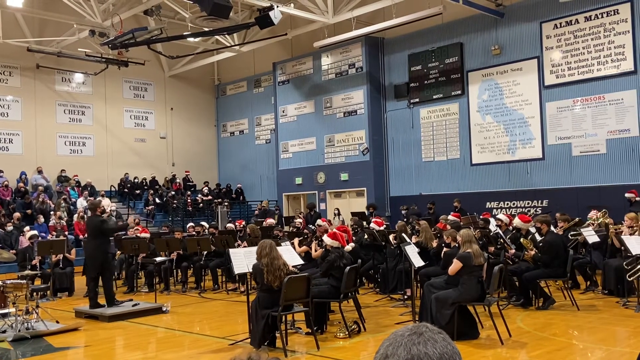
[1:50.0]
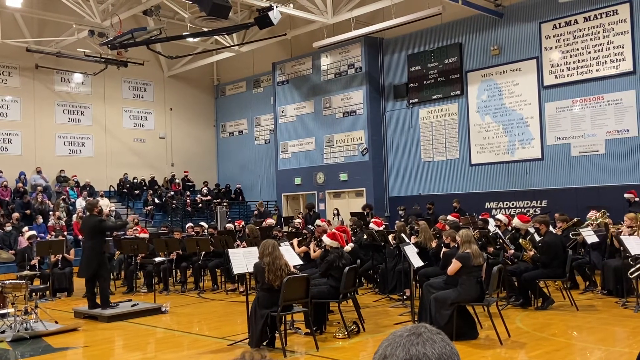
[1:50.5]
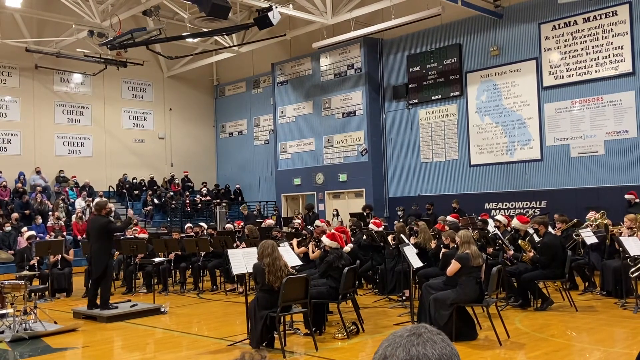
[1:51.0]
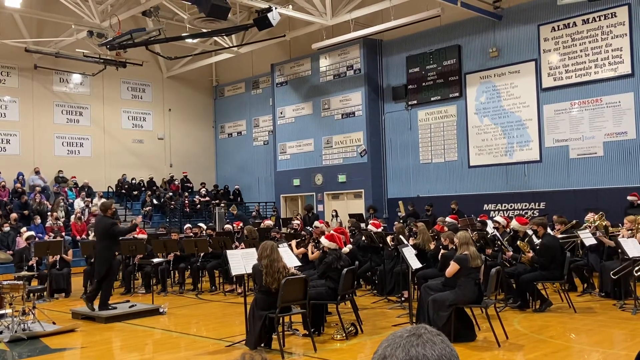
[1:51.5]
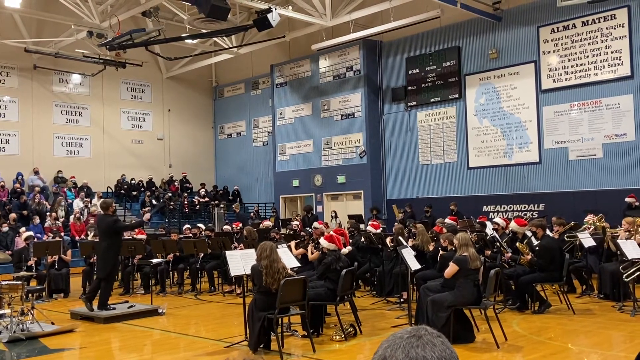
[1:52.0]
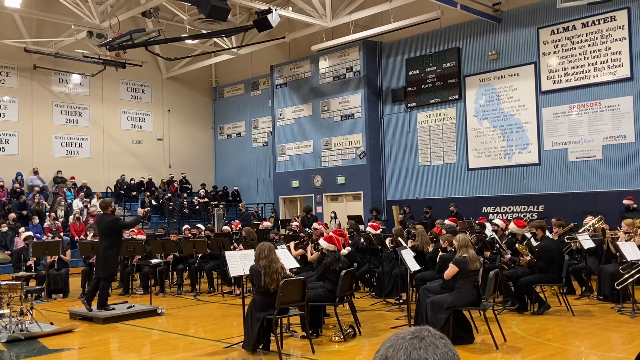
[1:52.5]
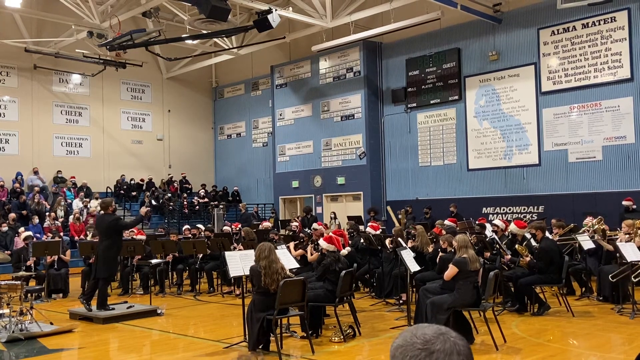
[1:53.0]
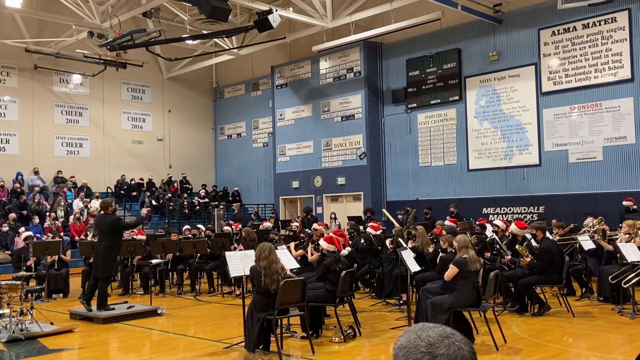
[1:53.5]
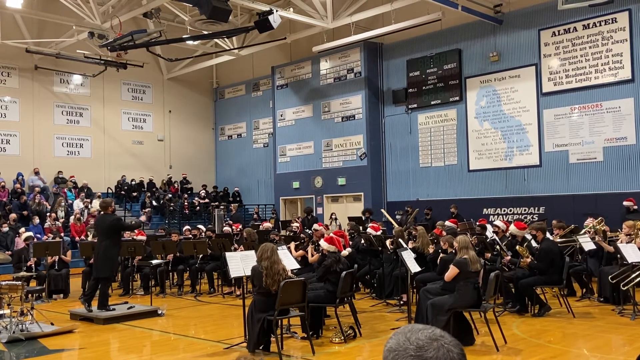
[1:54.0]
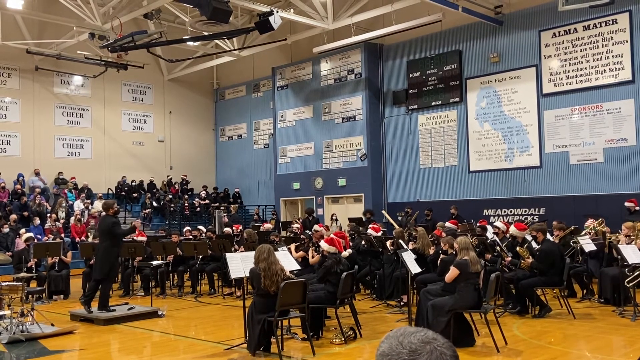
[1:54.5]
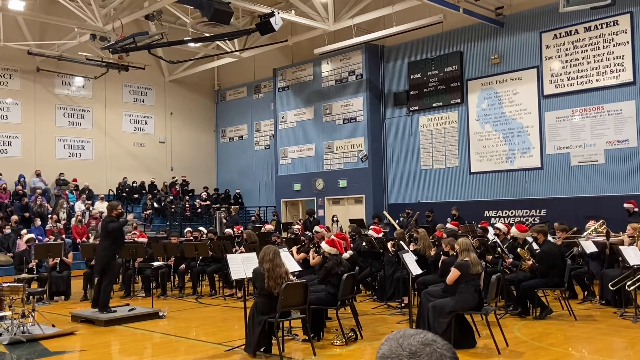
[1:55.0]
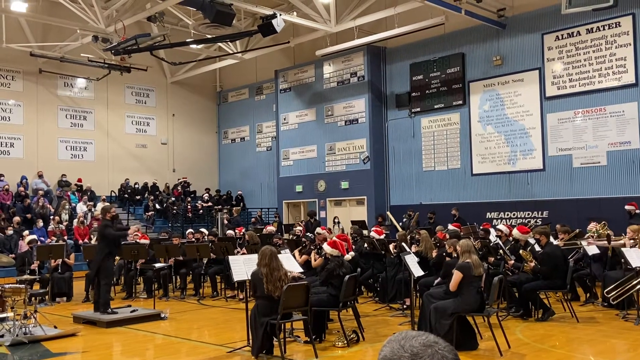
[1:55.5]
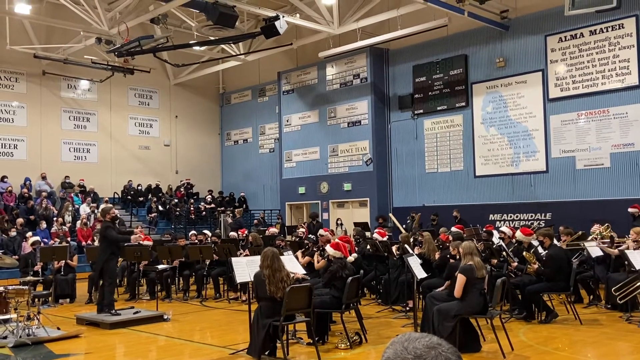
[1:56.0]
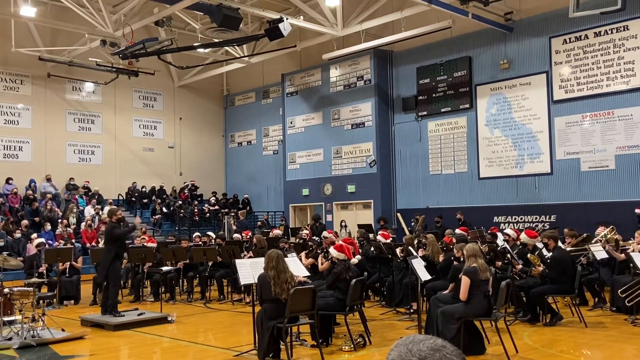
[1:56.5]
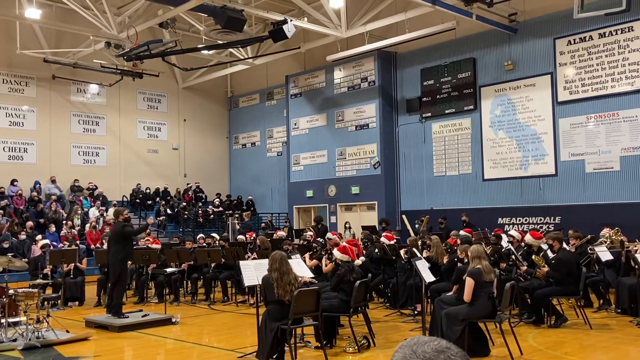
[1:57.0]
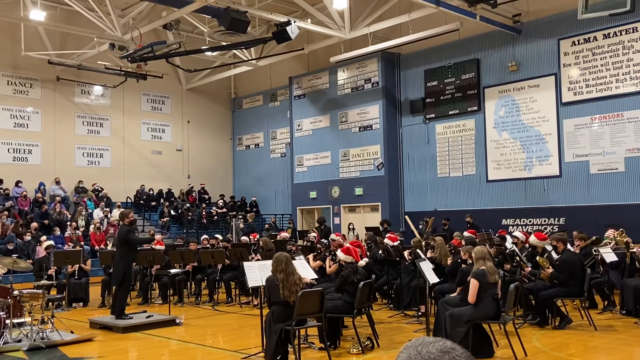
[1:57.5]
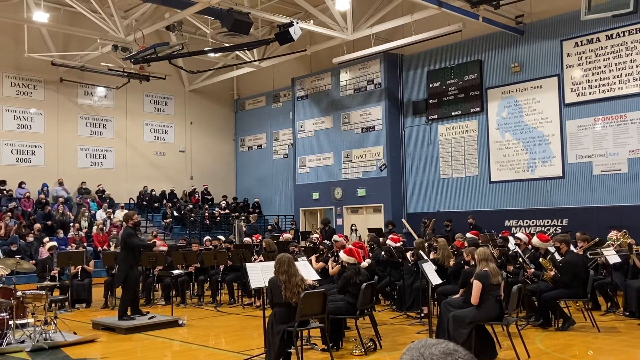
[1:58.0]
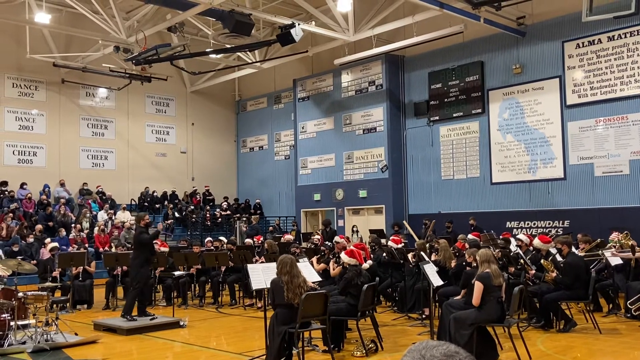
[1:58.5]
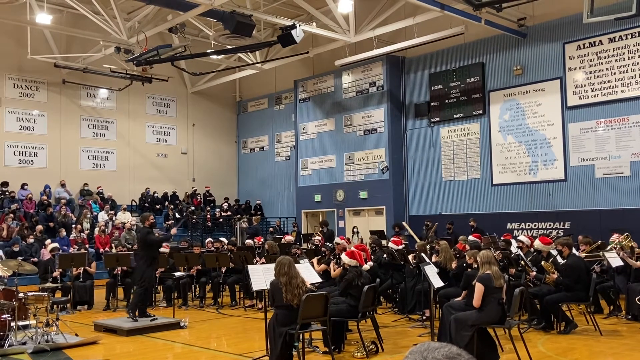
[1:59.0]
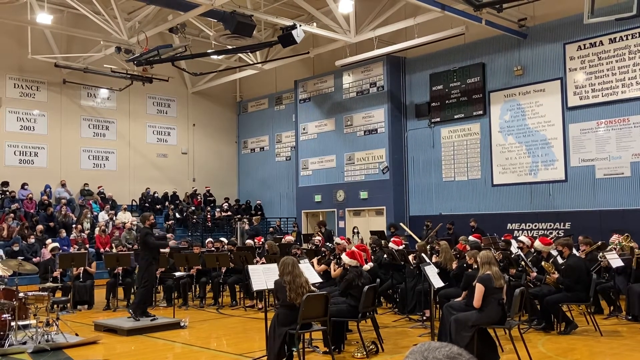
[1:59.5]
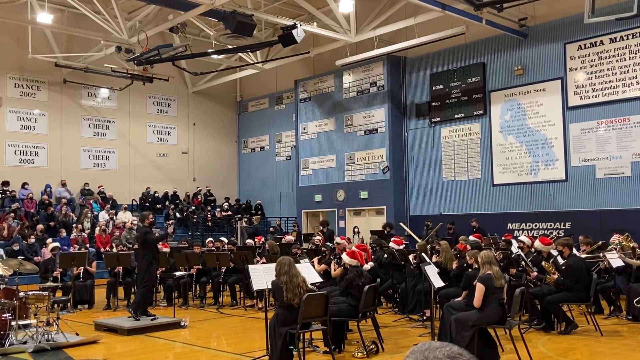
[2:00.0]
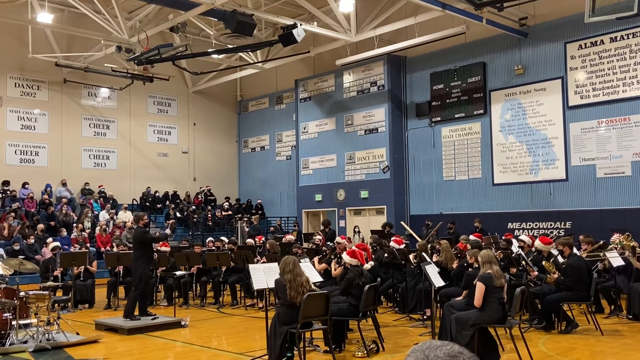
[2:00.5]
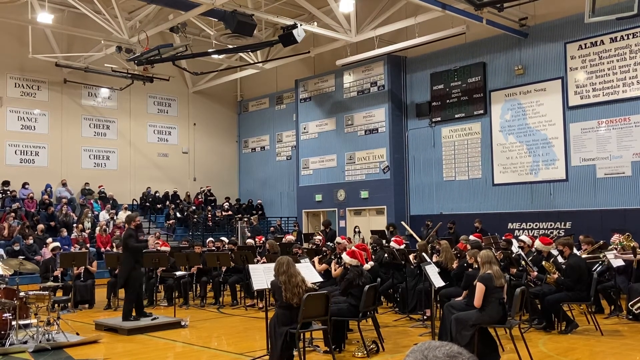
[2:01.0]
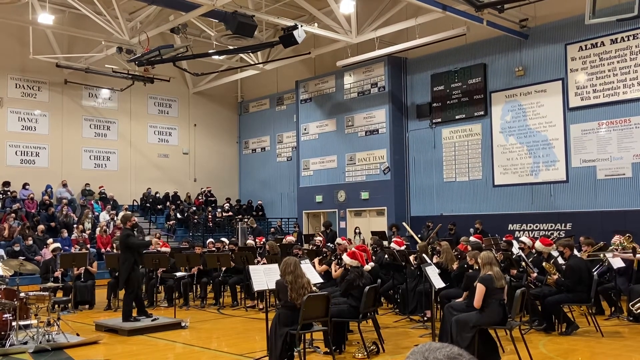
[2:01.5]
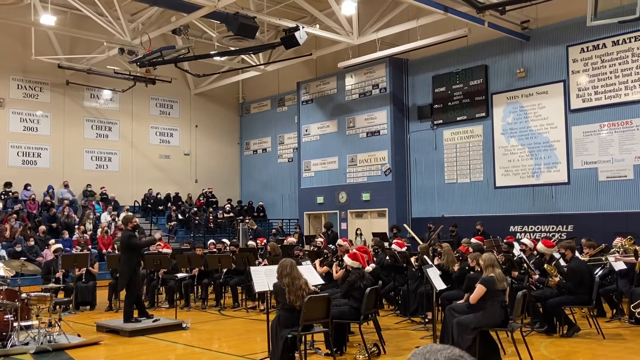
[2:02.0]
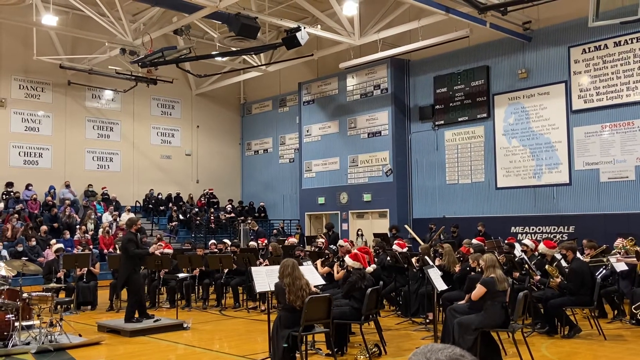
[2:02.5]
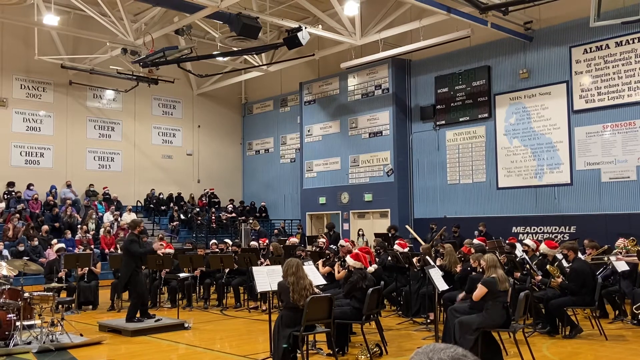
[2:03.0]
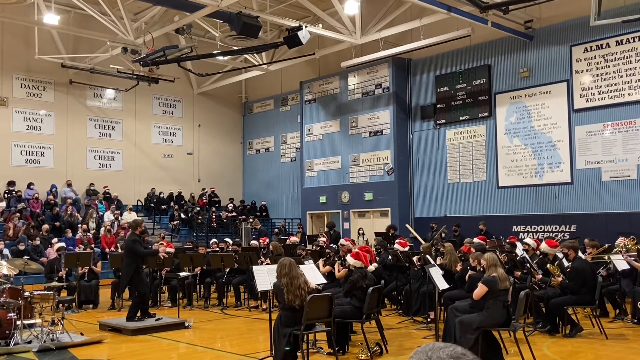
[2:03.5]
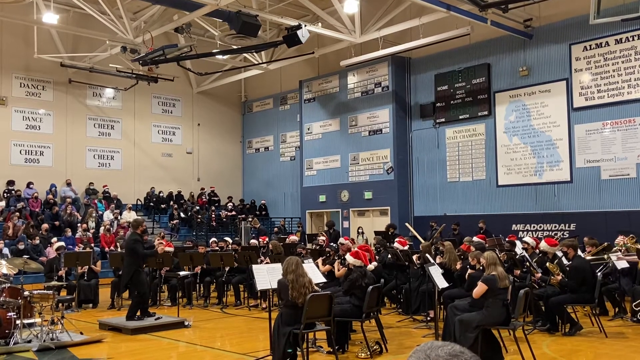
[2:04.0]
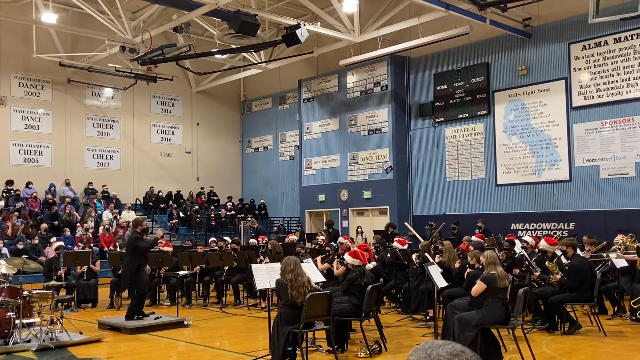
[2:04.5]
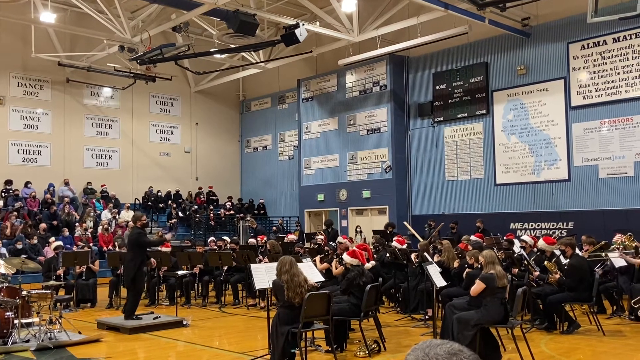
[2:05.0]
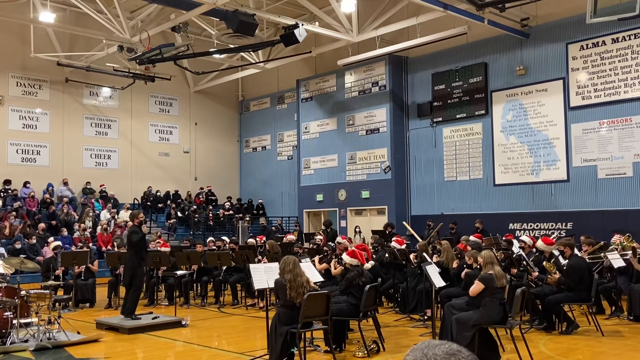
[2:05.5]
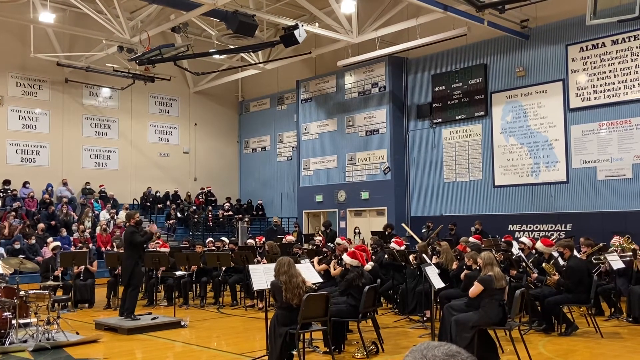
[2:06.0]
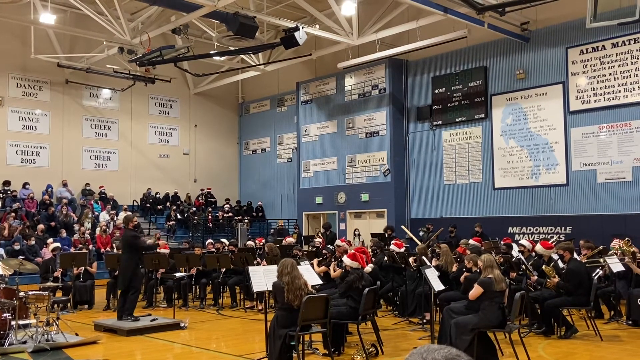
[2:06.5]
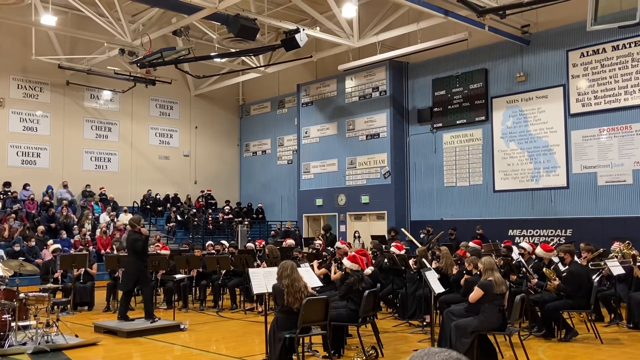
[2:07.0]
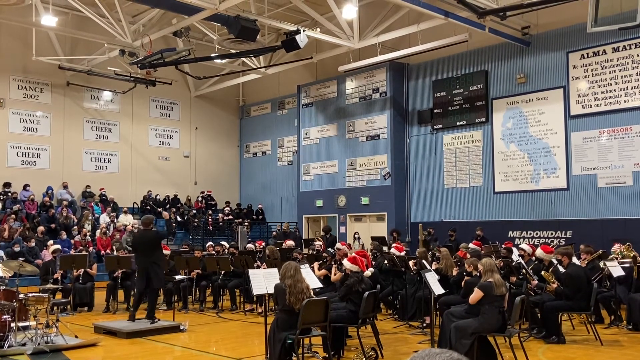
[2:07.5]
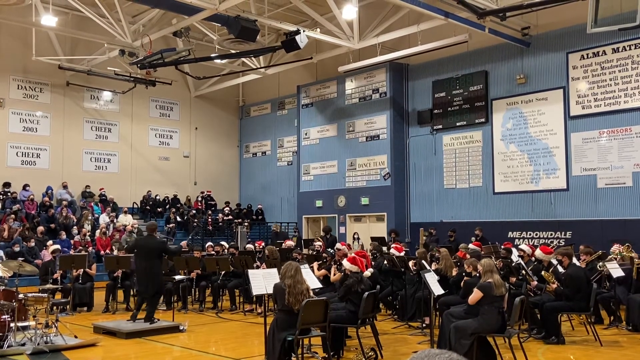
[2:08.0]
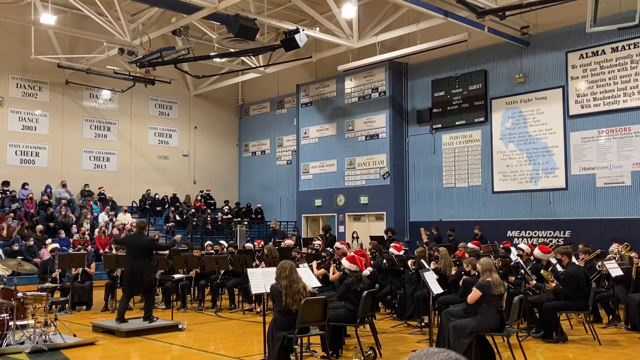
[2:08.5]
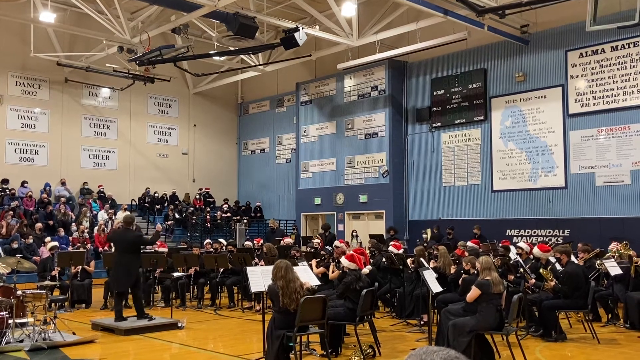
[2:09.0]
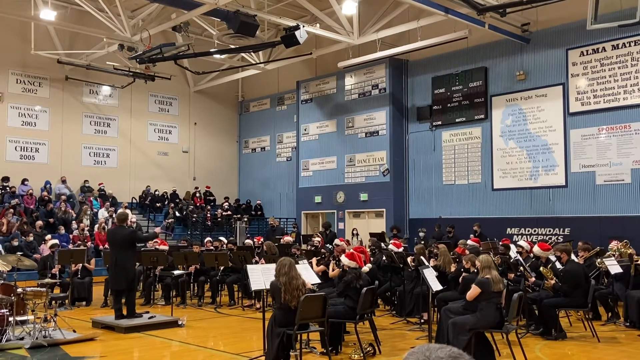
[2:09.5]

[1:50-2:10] What looks like it could be a high school band, with quite a few members, sits on black chairs in the gym. The conductor stands in front of them on a little square stage, and the students are arranged in a sort of half circle around him, watching him as he holds the stick and conducts the band. The conductor wears a black suit and what looks like a black mask on his face. All the students wear black, some of the girls in black skirts and black shirts, and some students wear red and white Santa hats. People sit in the bleachers at the back left, and at the bottom right the top of someone's head with gray hair is visible, showing people on both sides of the gym watching the show. The basketball nets are pushed up.